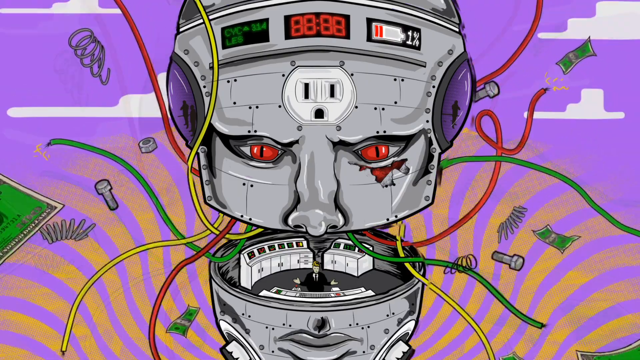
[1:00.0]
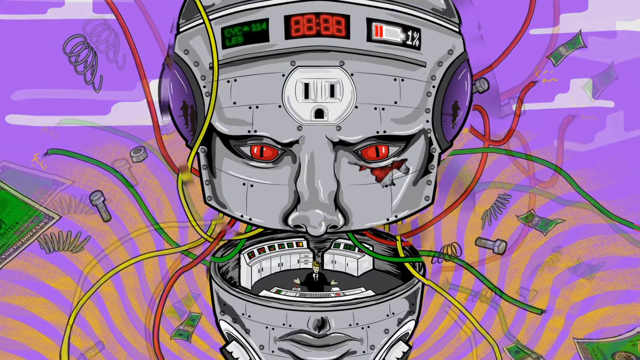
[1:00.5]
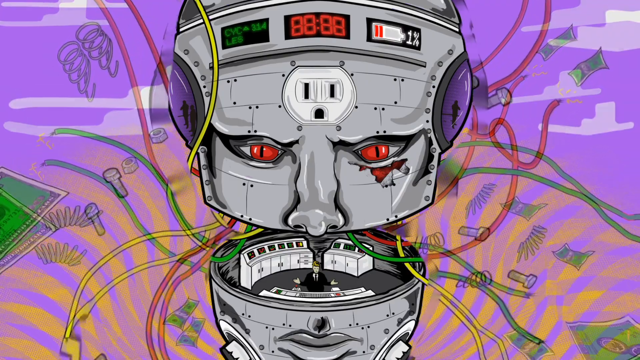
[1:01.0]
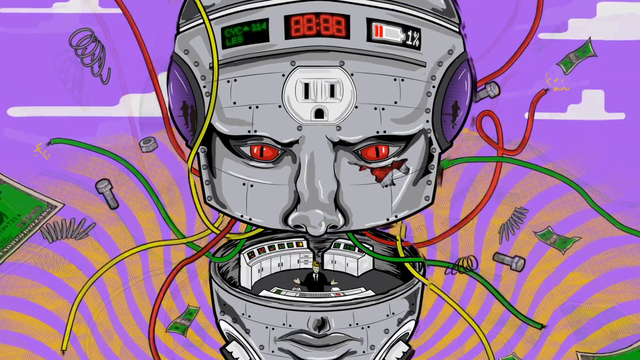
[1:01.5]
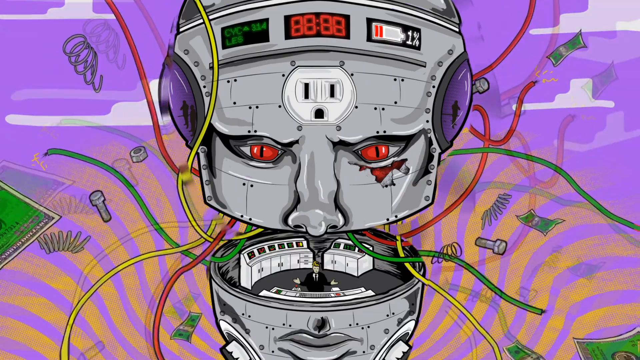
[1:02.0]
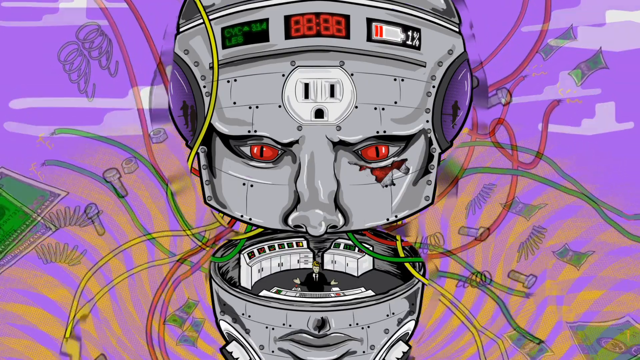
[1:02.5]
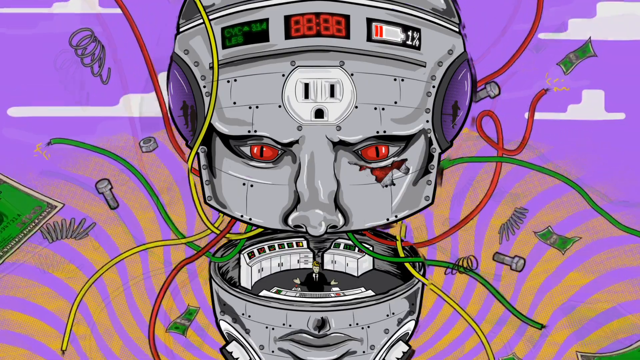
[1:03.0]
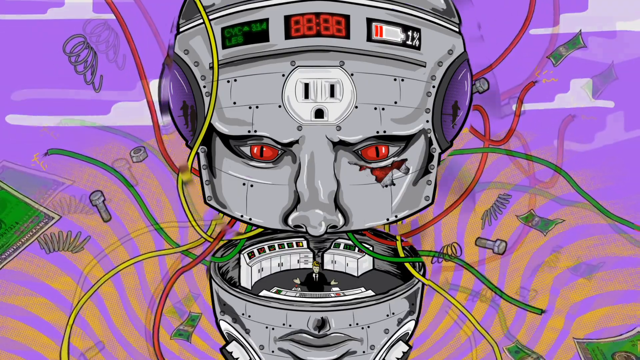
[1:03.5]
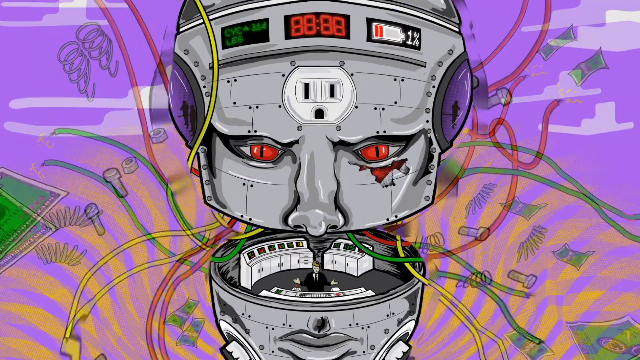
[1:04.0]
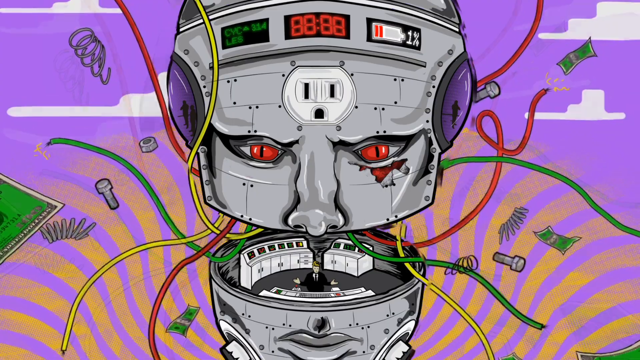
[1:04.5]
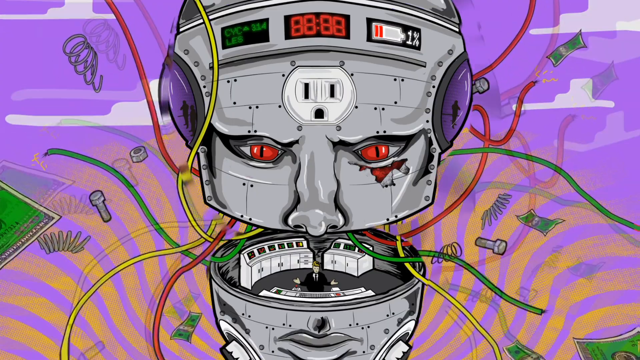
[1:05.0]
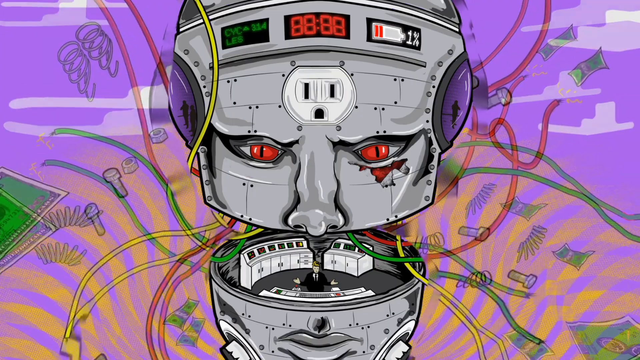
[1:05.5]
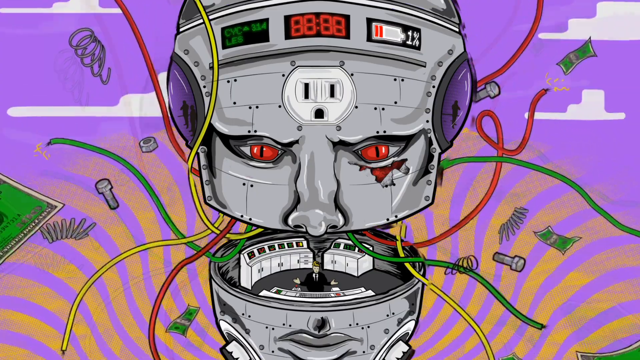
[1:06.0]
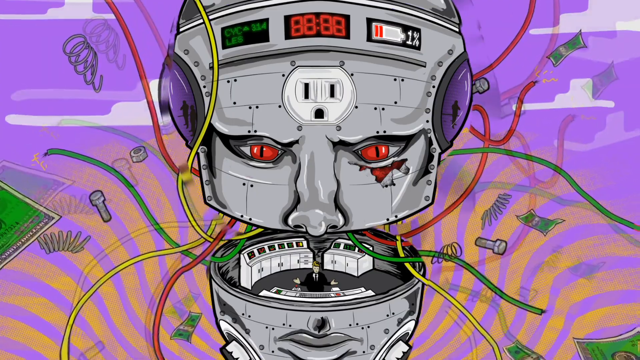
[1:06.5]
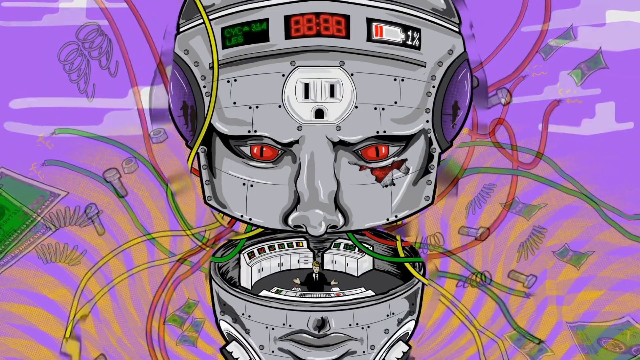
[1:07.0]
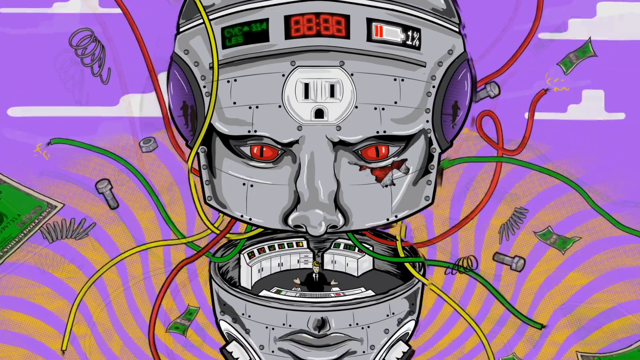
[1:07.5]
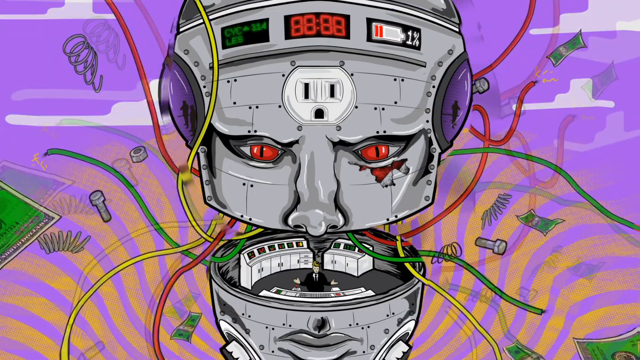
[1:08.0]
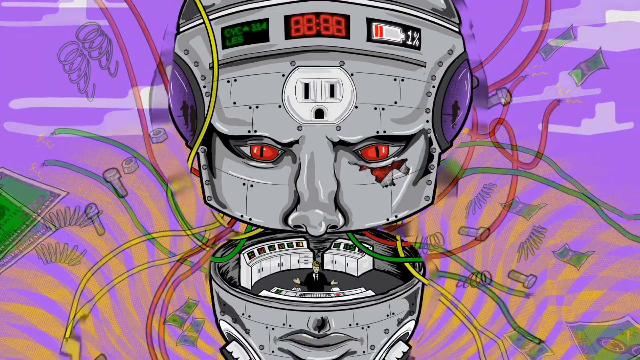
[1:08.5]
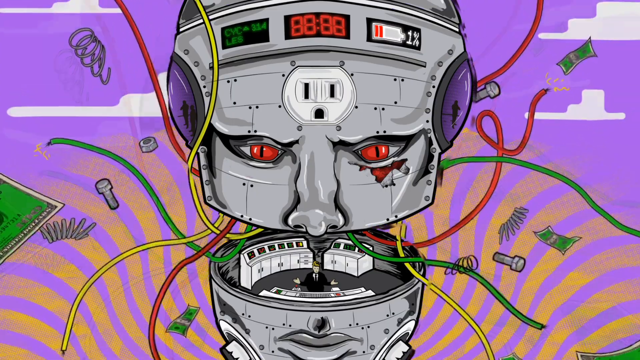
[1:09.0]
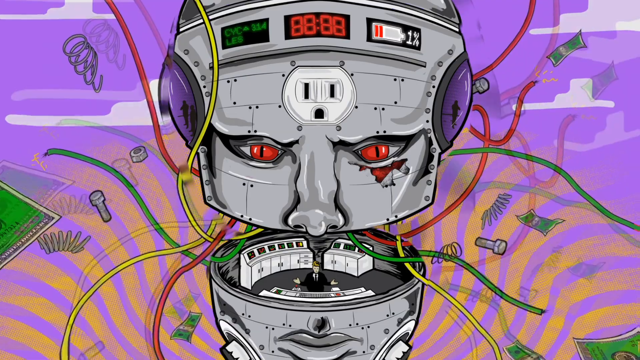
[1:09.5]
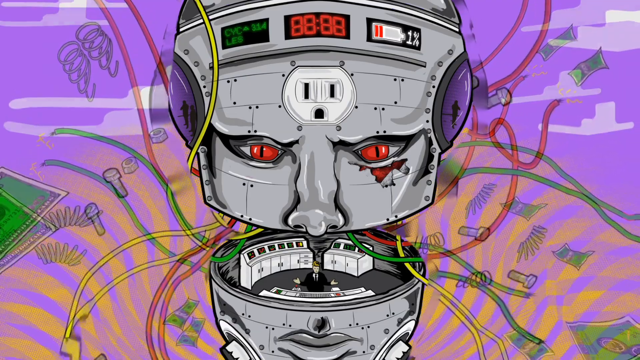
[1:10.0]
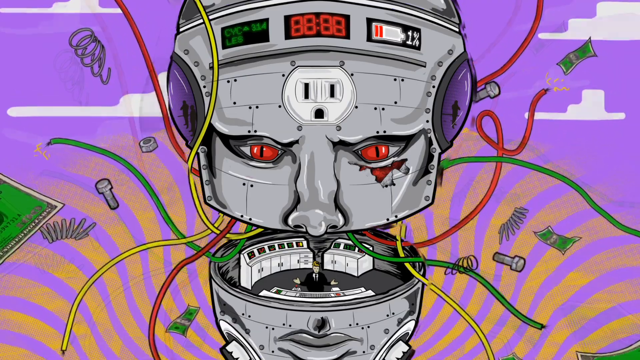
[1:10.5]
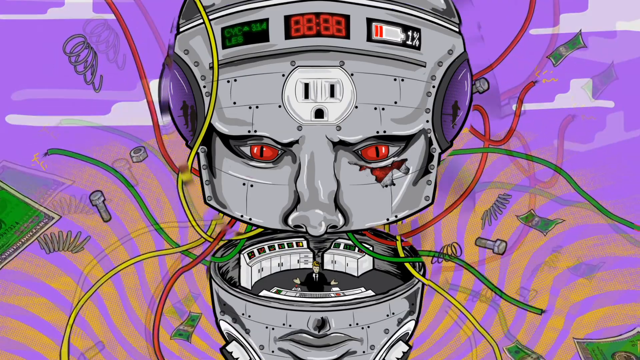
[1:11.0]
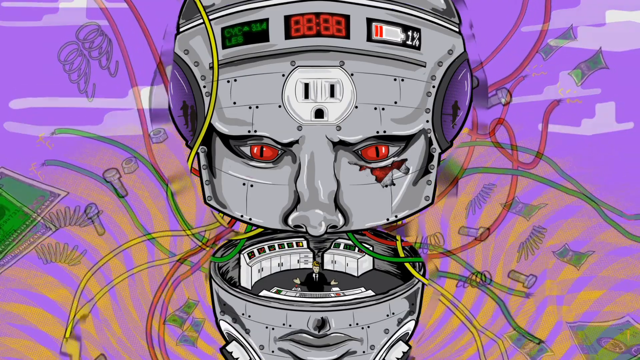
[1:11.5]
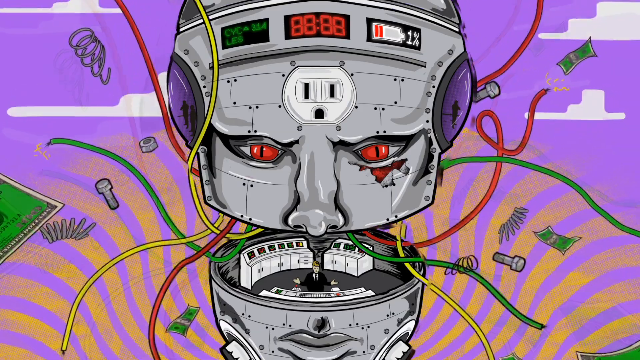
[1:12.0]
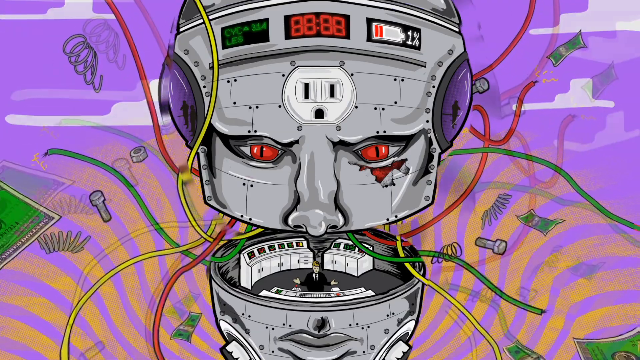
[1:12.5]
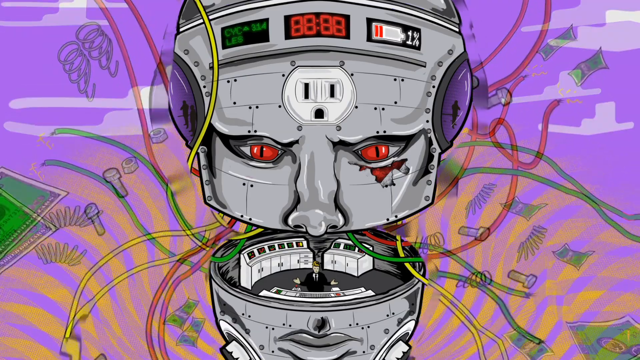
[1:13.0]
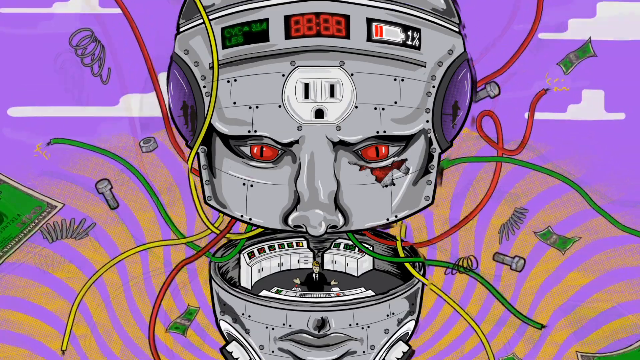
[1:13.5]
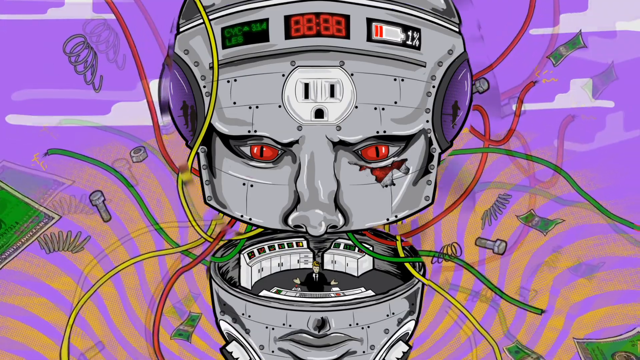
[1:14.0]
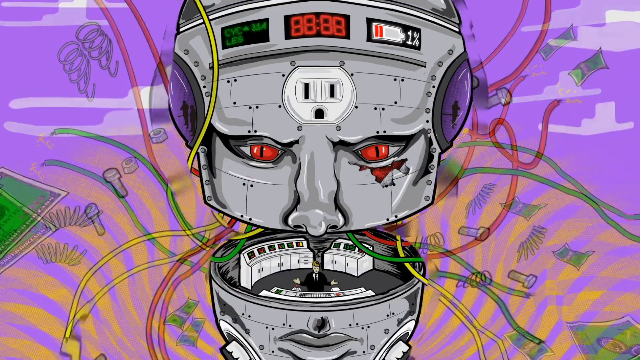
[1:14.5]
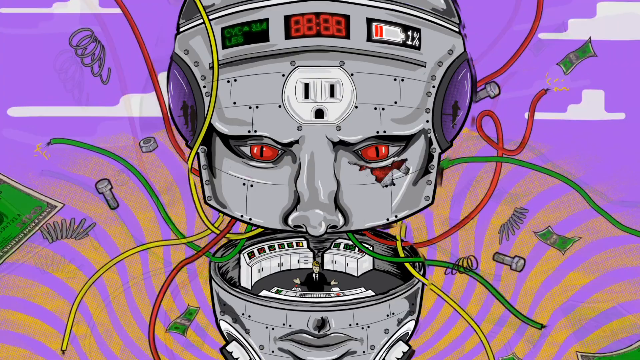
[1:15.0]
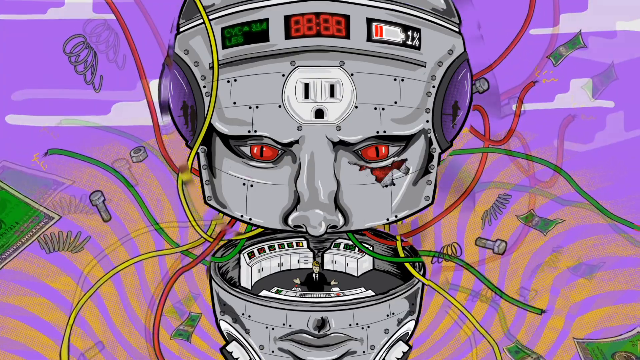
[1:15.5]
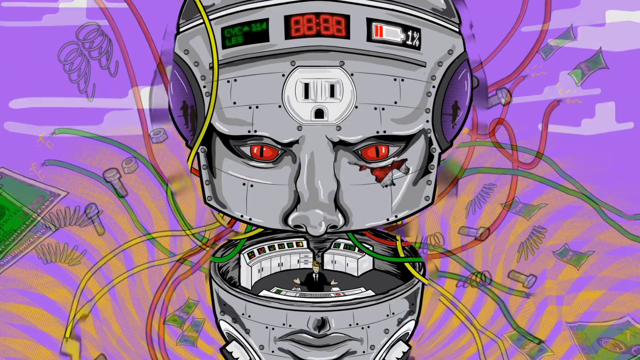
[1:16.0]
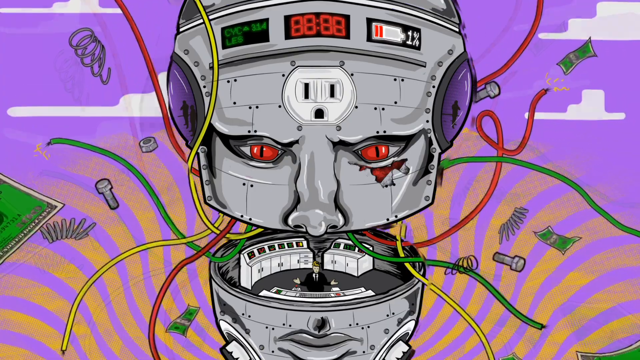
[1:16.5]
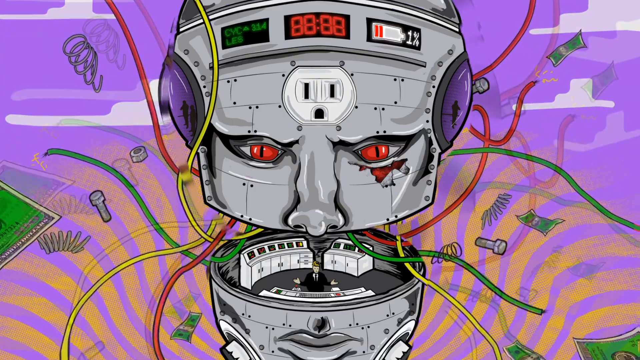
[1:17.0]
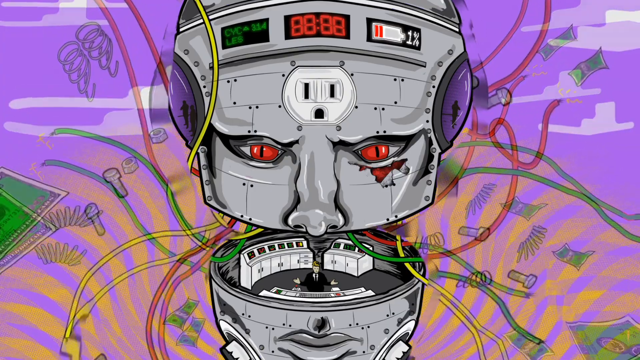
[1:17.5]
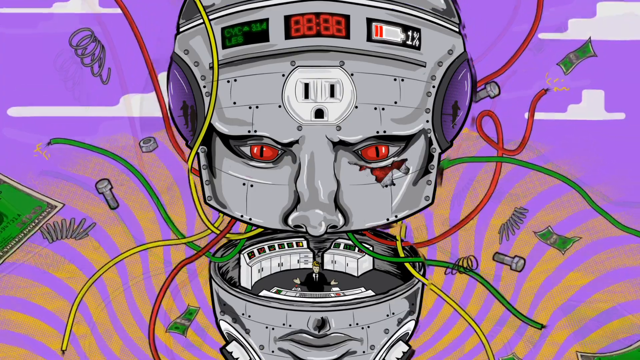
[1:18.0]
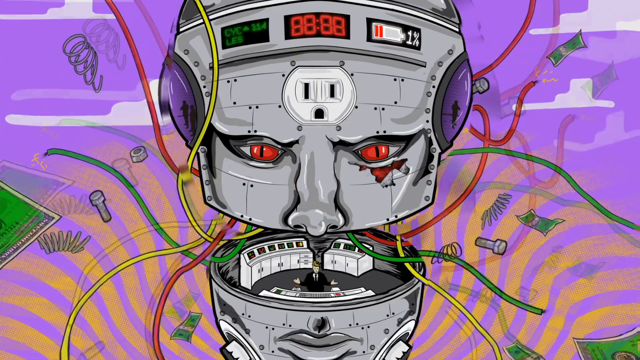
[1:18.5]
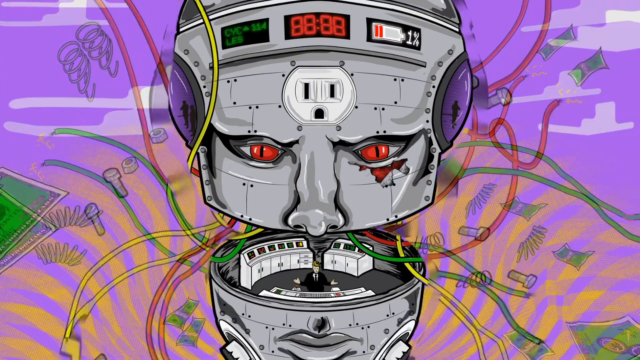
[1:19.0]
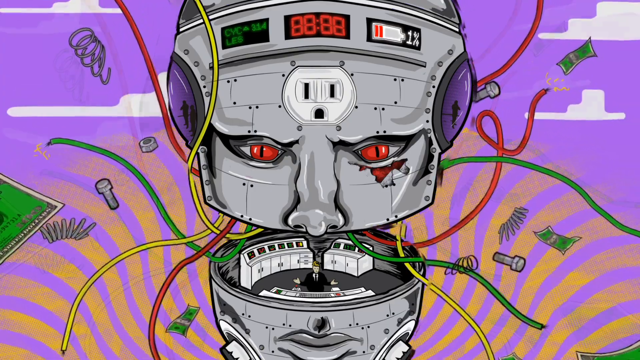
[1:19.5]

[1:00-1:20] A cartoon shows a giant robot head. The top of the head is the nose, eyes and forehead; it has red eyes and gray skin, with an injury under the eye on the viewer's right. At the top in the middle is a giant countdown clock reading "88;88". To its right a battery power indicator shows 1% battery power remaining, and to its left the text reads "314 cycles". Below the nose is a gap in the head that appears to be a control room, with green, red and yellow wires coming out and electricity coming out of their ends. Below the control room is the bottom of the head with the robot's mouth and chin. A man in a black suit stands in the control room facing a white control panel, his hands faced up as if he is trying to raise something. In the background, yellow wavy lines rotate counterclockwise, springs, bolts and washers rotate, and dollar bills fly around.